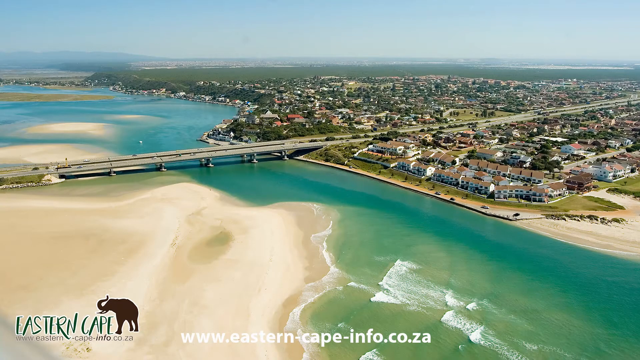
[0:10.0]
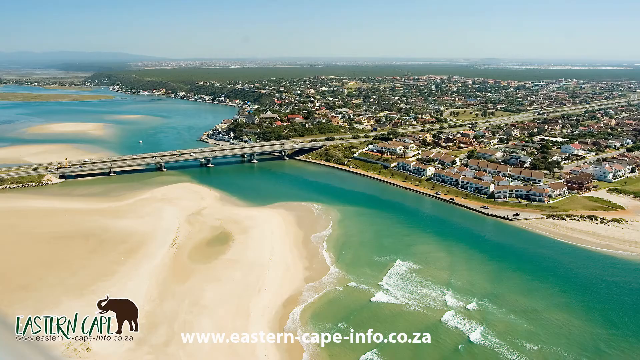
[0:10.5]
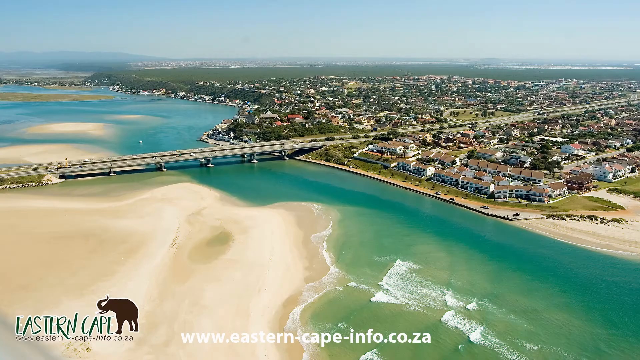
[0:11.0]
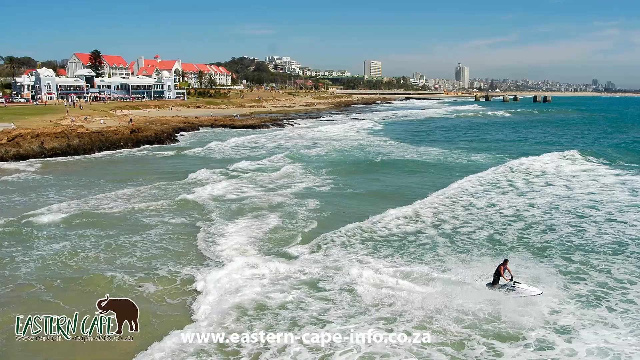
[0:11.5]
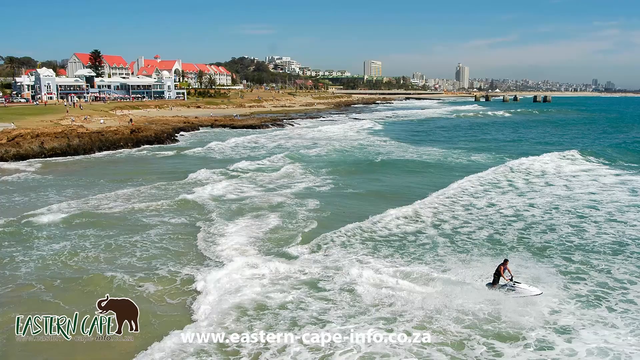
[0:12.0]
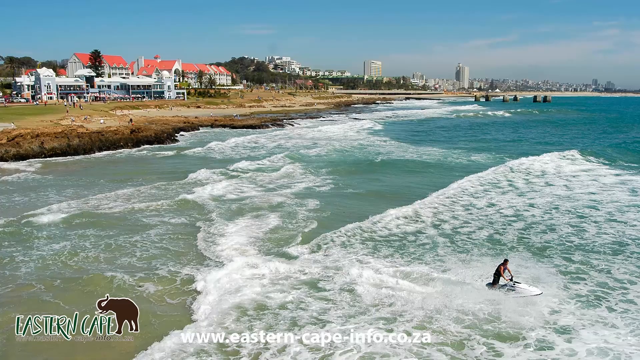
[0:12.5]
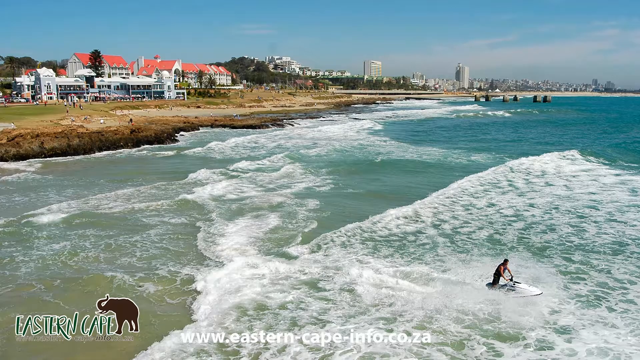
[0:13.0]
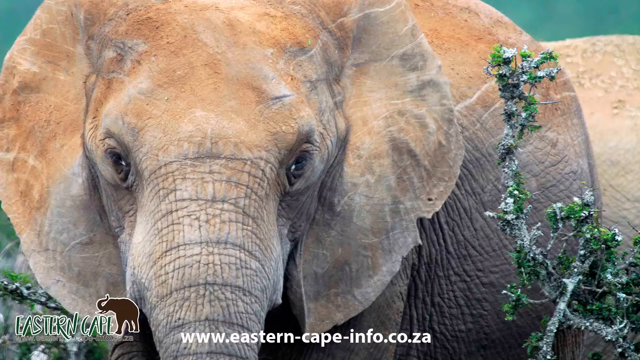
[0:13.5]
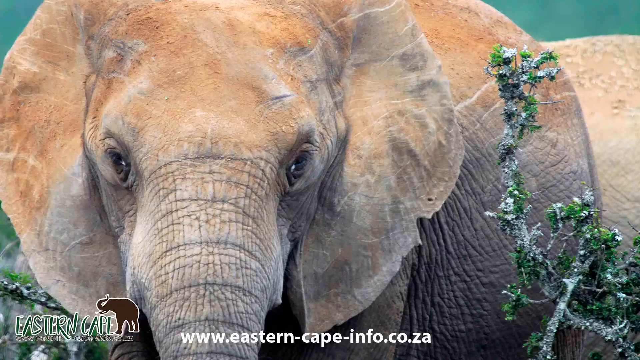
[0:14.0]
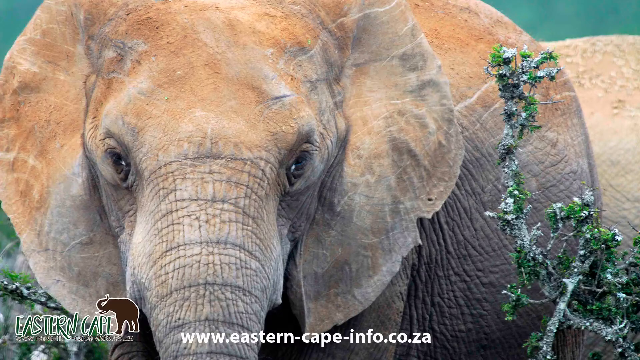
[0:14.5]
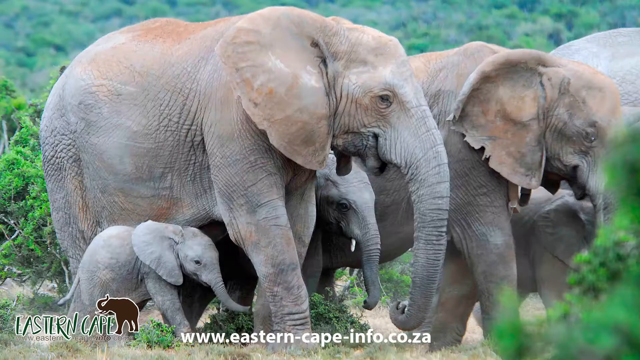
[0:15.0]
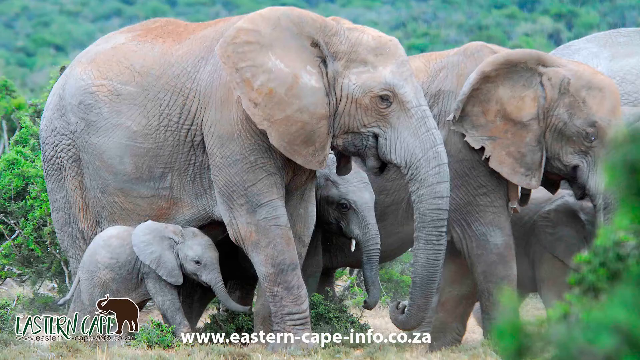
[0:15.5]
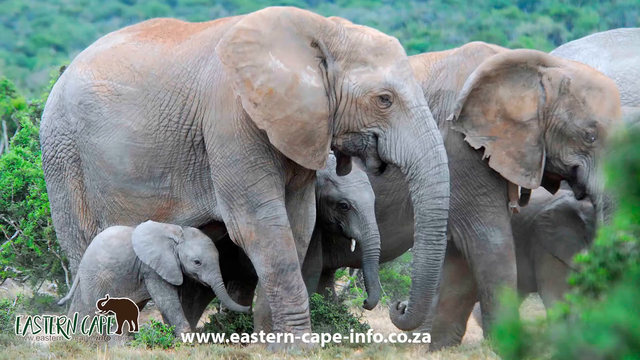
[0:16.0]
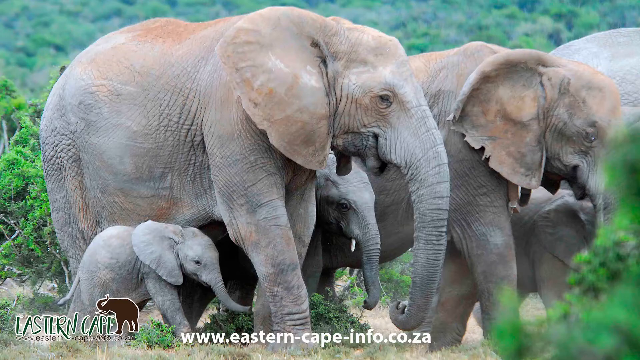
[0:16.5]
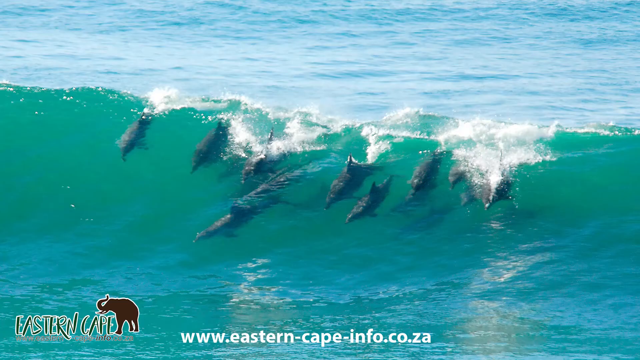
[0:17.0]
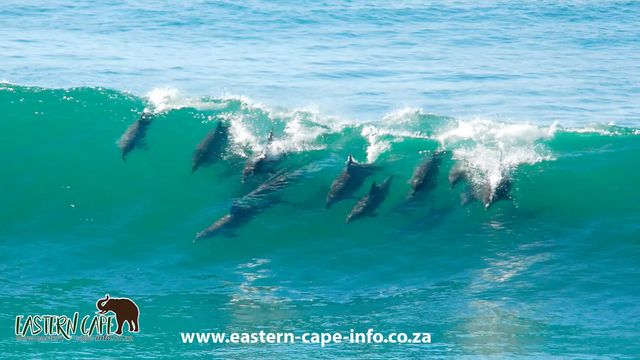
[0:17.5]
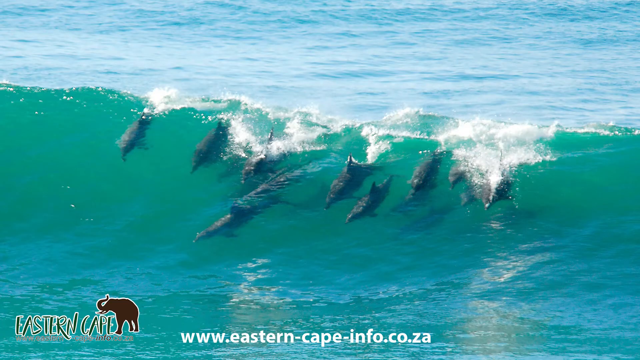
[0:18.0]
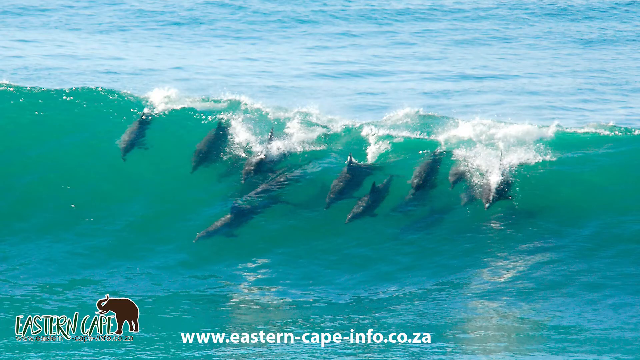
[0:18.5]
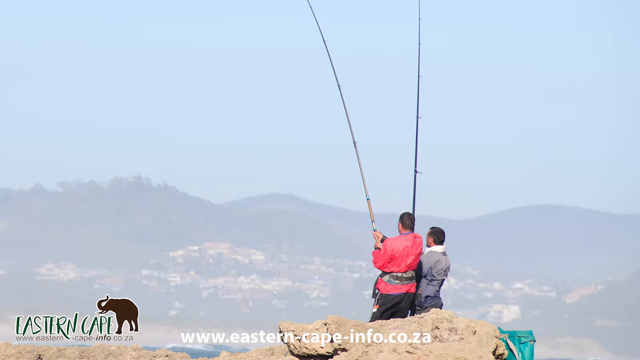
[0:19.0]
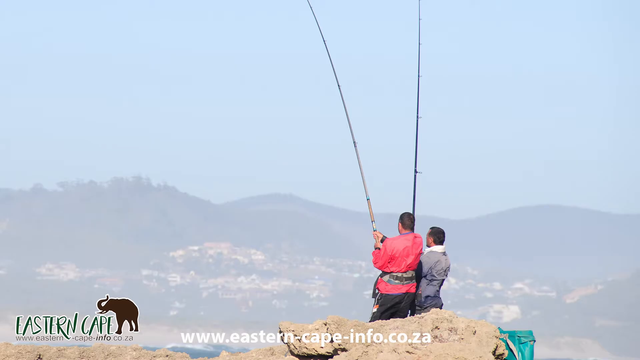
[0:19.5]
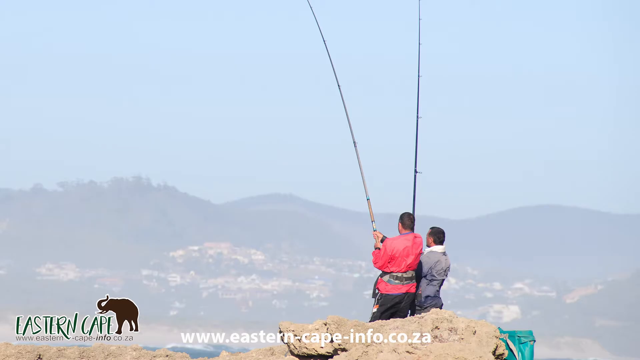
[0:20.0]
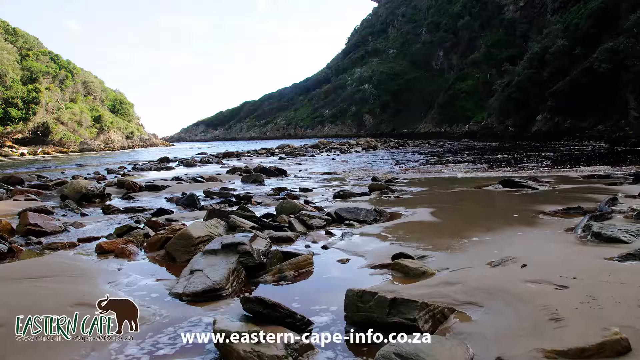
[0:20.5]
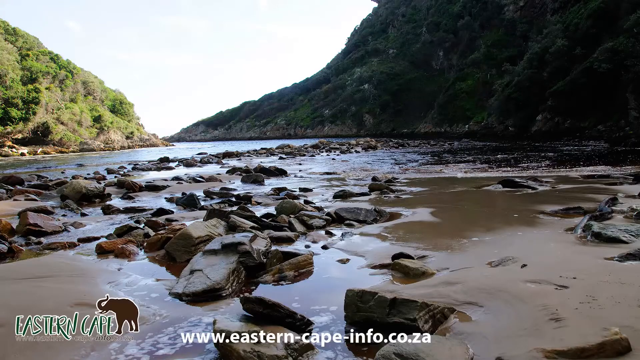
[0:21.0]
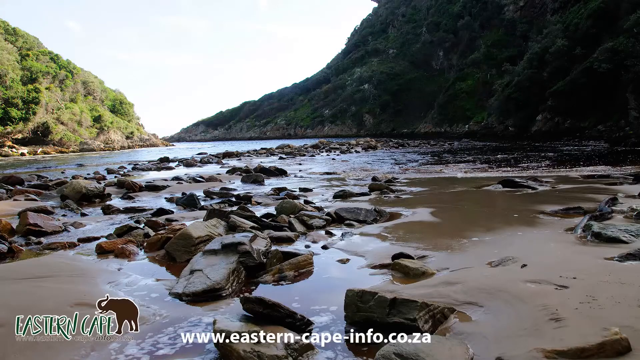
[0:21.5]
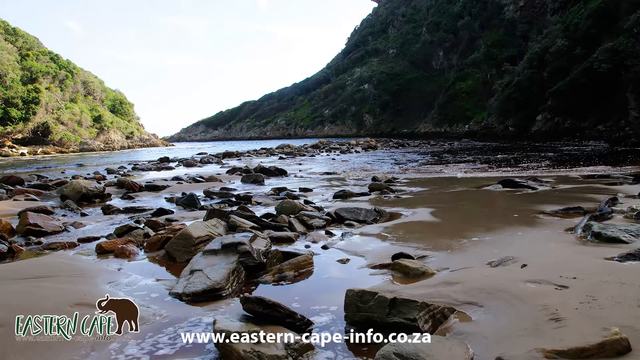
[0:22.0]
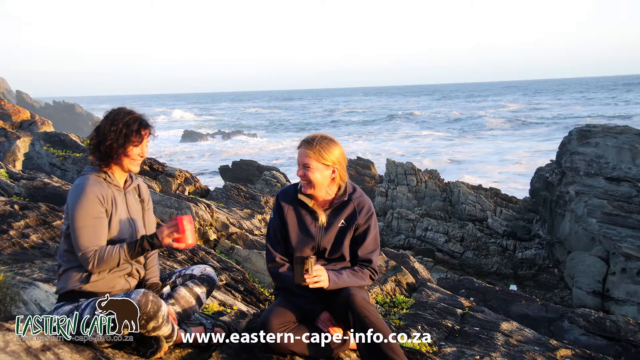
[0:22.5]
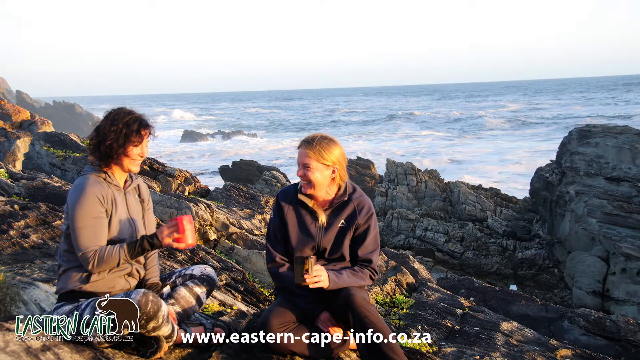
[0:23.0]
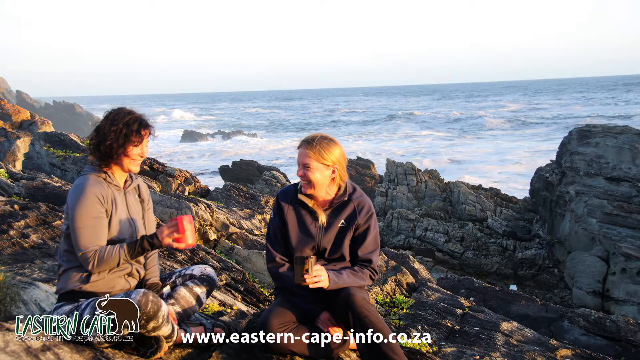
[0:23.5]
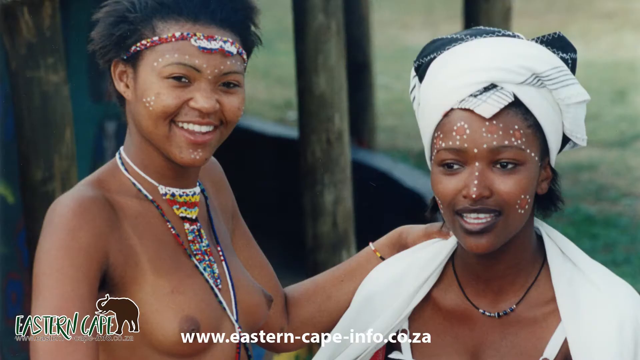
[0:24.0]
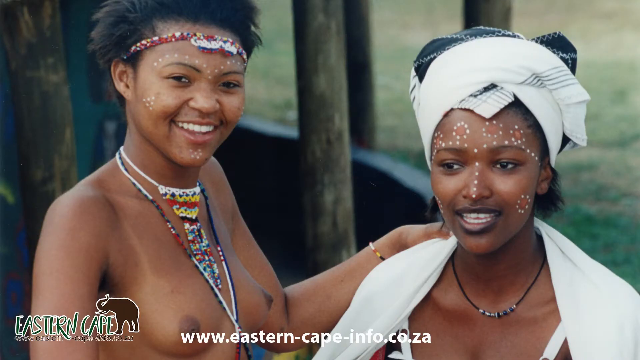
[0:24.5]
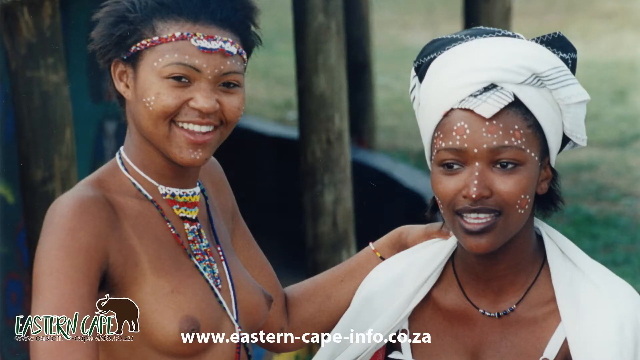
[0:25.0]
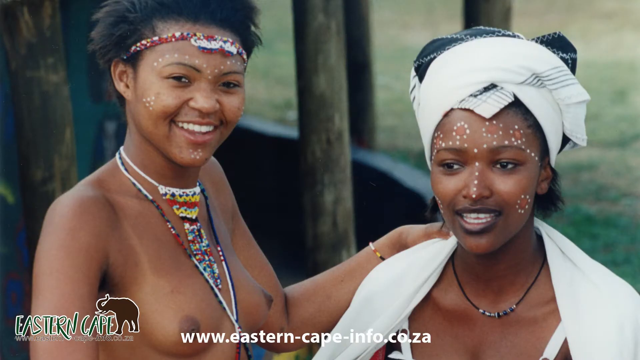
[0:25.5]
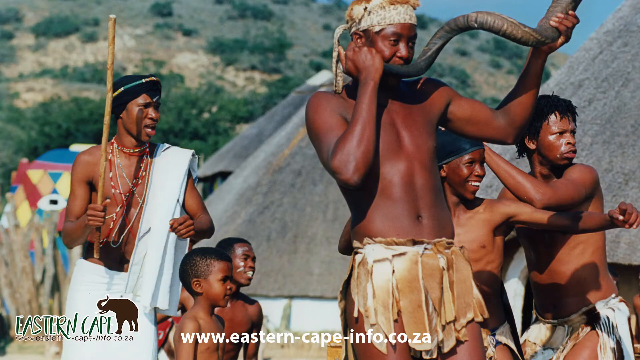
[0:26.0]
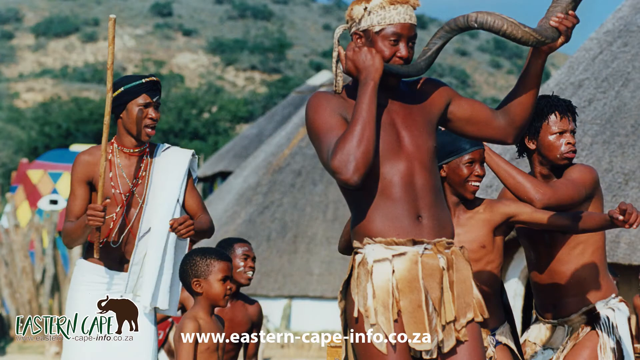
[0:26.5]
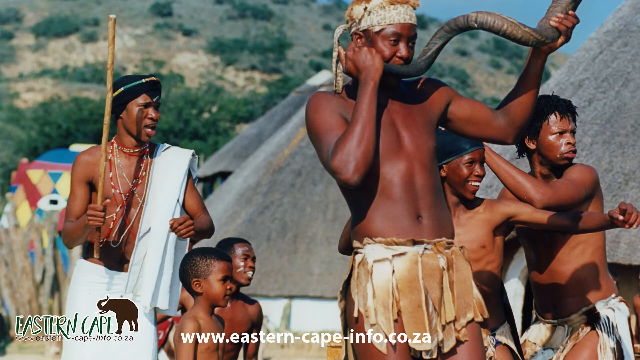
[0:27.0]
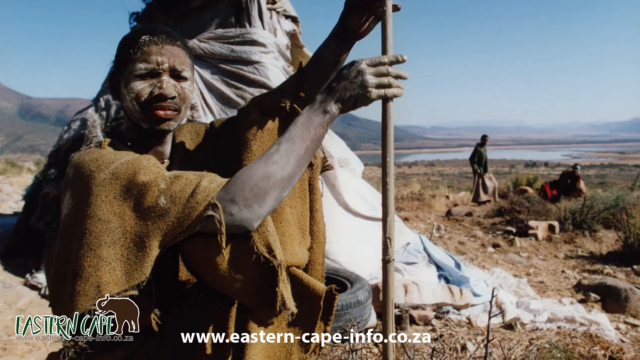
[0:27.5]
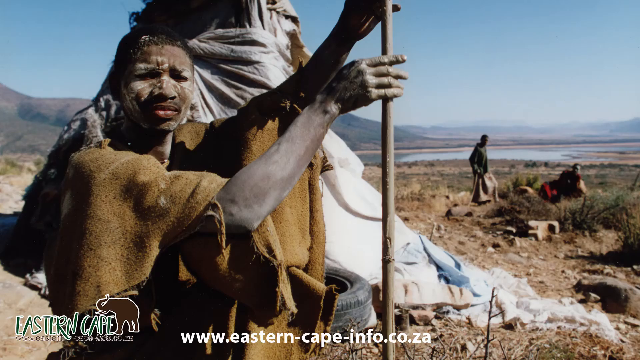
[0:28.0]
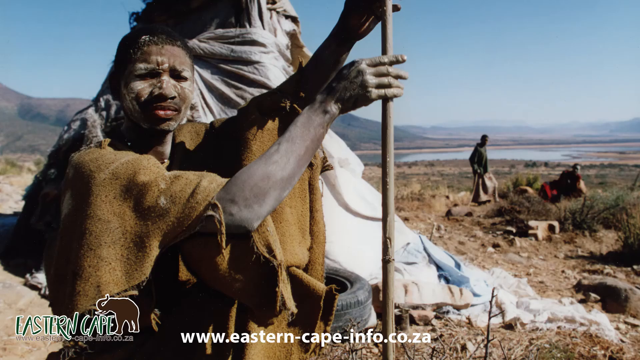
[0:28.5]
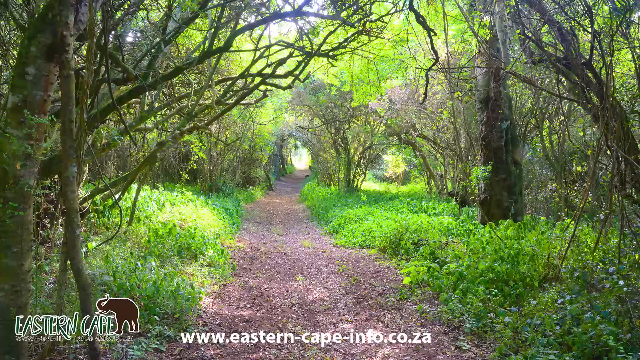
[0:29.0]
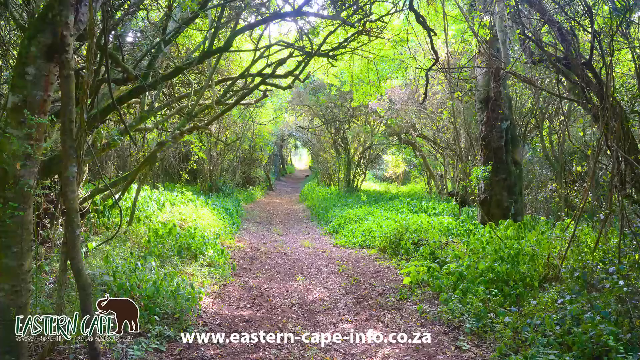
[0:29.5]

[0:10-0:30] Shots along the coast show small waves crashing. The ocean is very blue, and small buildings and taller buildings, like a city, are in the background. Some people ride jet skis in the water. Next, a younger elephant with some orange dirt on top of it appears; the elephant itself is grey, stares into the camera, and has some plants near it. The next shot is of a family of elephants: four elephants are visible, three bigger ones and two smaller ones. Then at least 17 dolphins ride a tall wave in the ocean. Two people fish with very tall fishing rods that point up toward the sky; the background is very gray and looks very foggy. The water below them can't be seen, so they appear to be very high up, sitting on top of something like a rock formation. The next shot shows wet rocks in a valley with a river; the river seems very low, the dirt beneath is still very wet, and tall mountains surround the valley. Two women sit on some rocks near the ocean with waves crashing behind them; one woman holds a red cup and the other is laughing. Next, two African women wear tribal paint and traditional accessories; one wears a head wrap and the other wears head accessories around the forehead. The next shot shows a tribe in traditional wear using traditional tools, with huts behind them; two groups of three are visible.